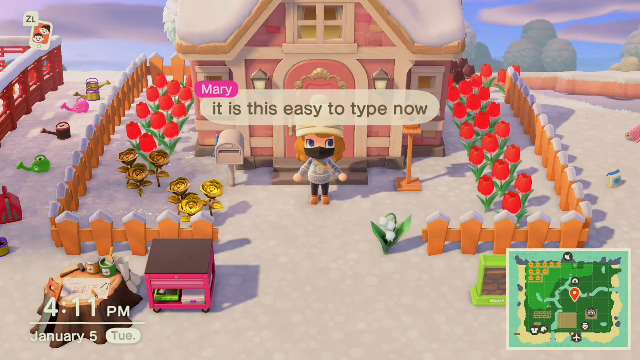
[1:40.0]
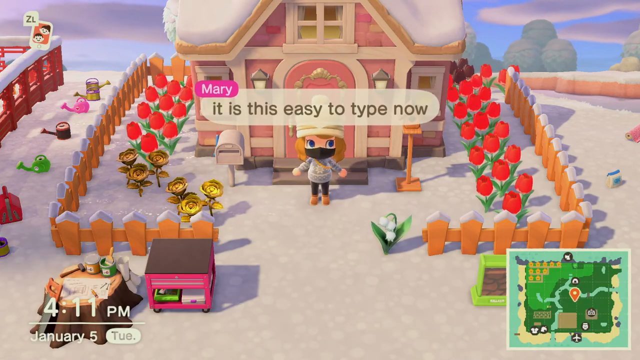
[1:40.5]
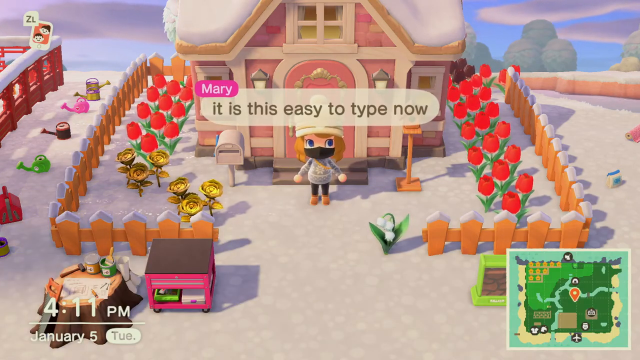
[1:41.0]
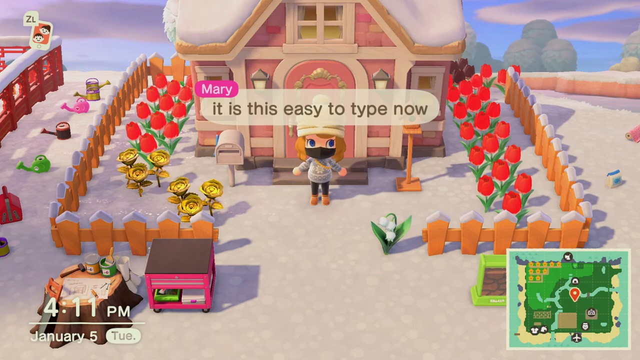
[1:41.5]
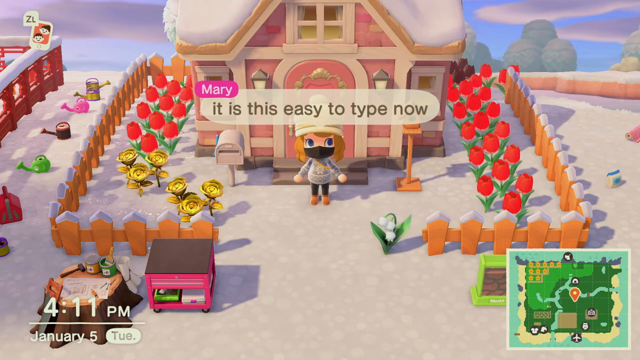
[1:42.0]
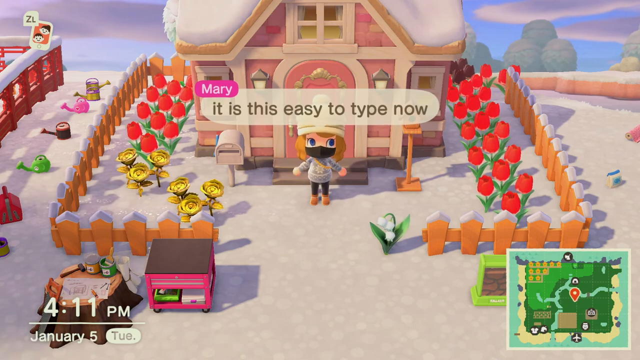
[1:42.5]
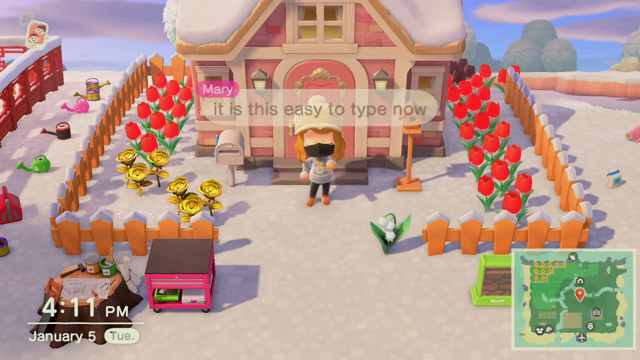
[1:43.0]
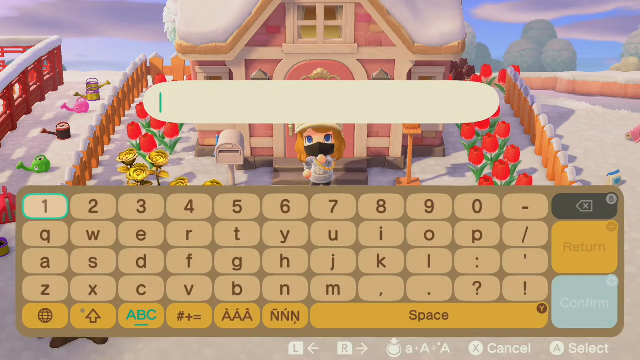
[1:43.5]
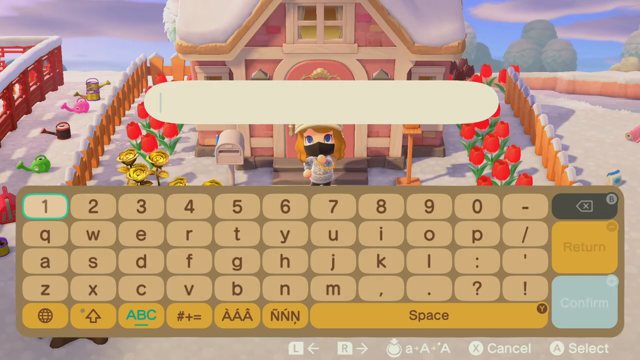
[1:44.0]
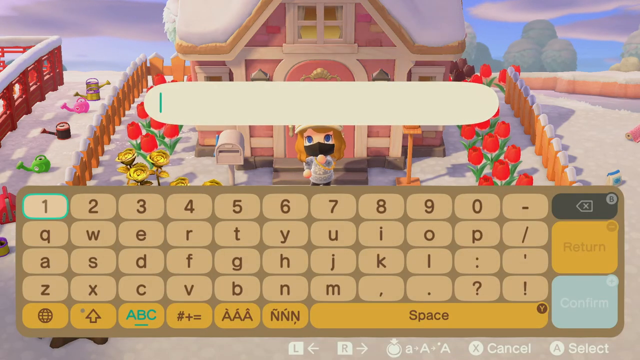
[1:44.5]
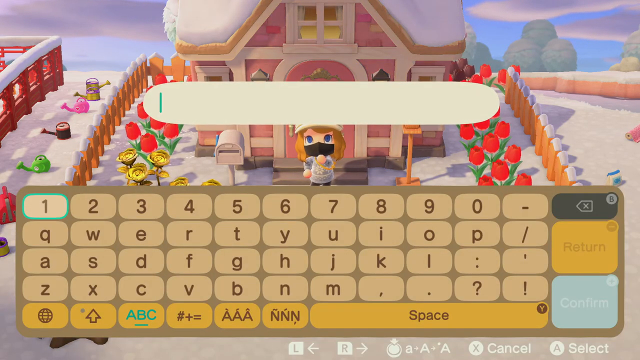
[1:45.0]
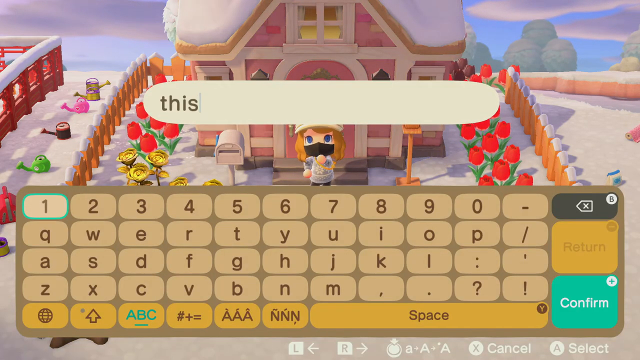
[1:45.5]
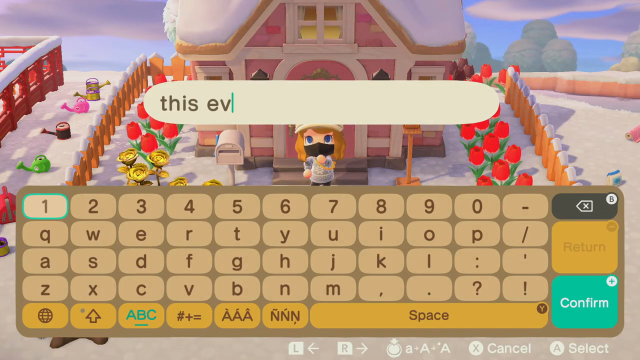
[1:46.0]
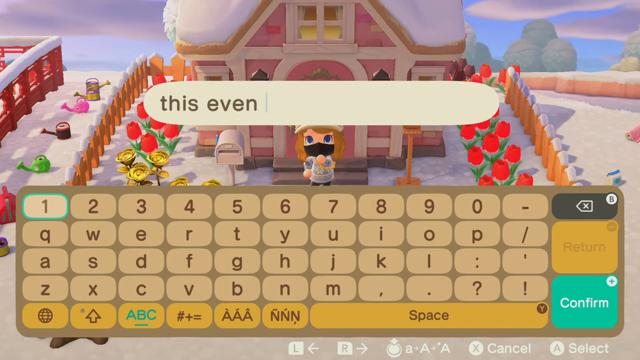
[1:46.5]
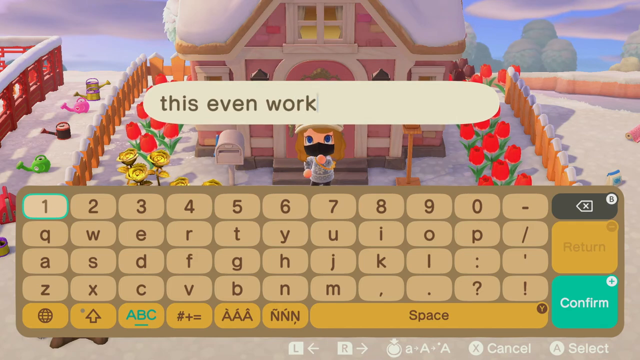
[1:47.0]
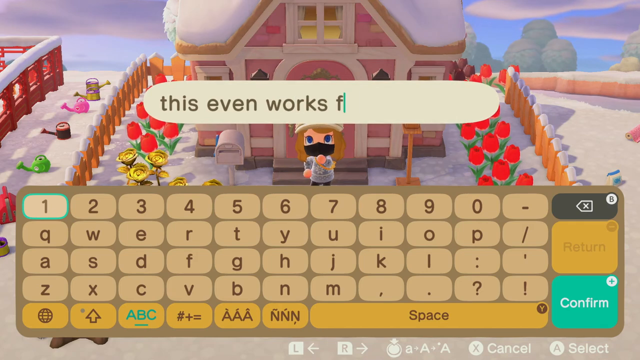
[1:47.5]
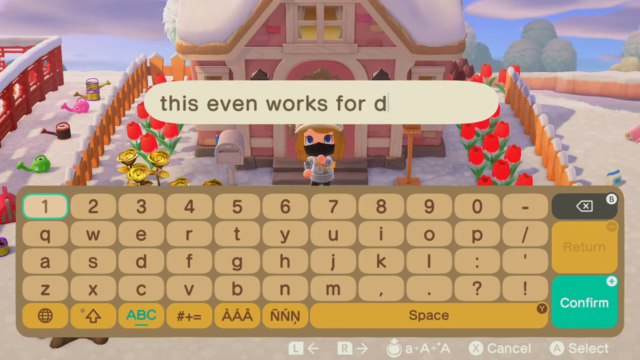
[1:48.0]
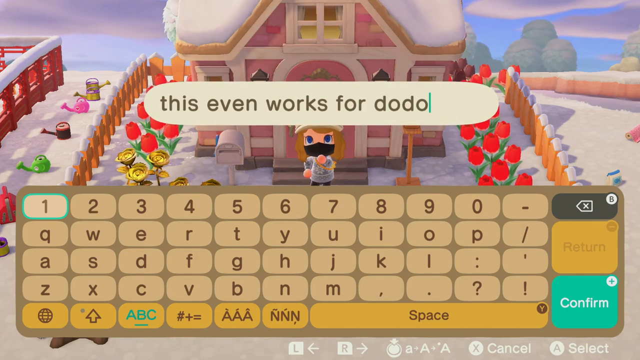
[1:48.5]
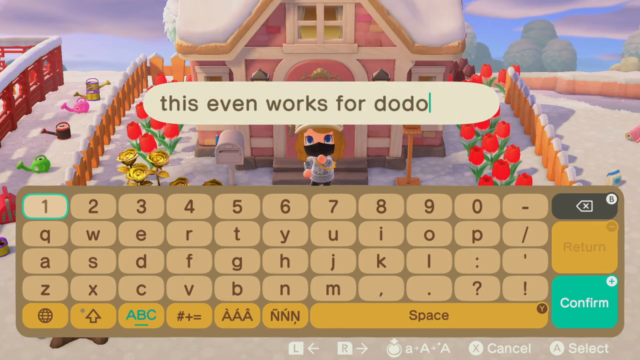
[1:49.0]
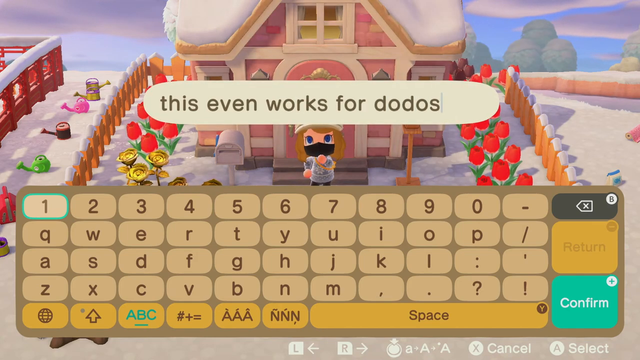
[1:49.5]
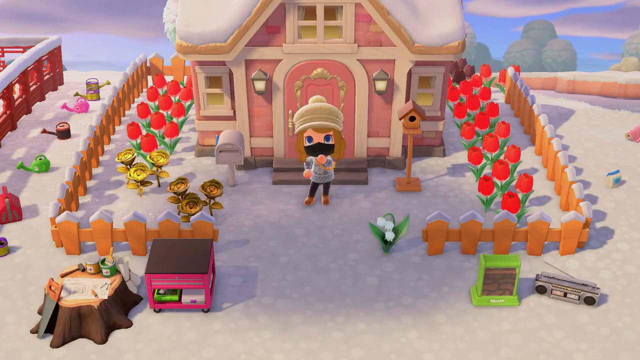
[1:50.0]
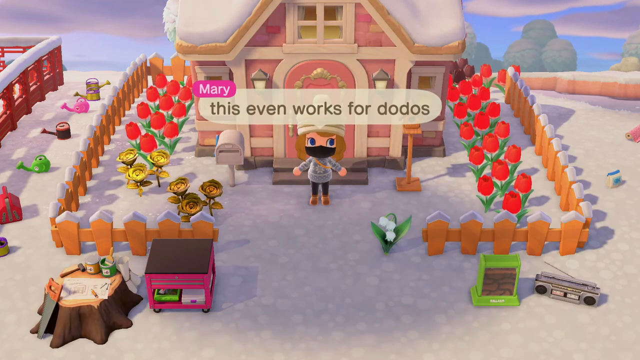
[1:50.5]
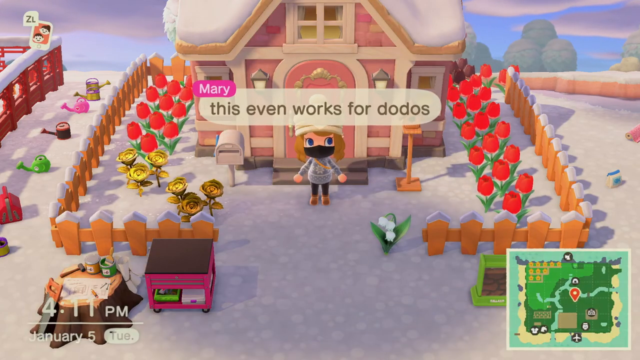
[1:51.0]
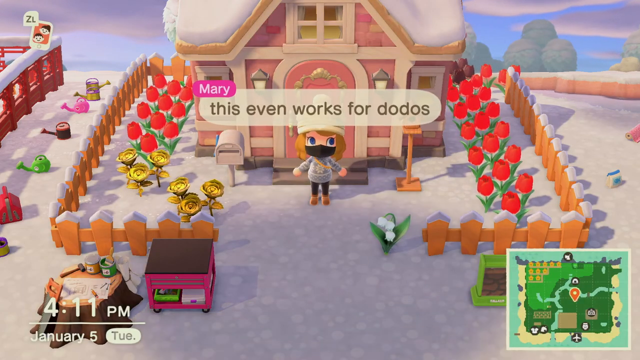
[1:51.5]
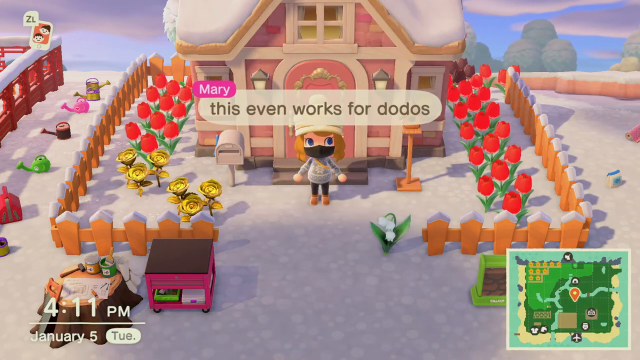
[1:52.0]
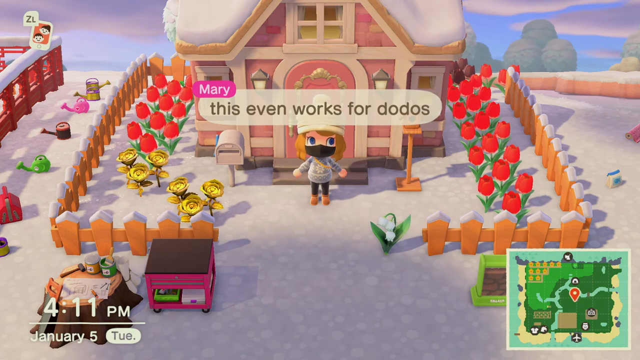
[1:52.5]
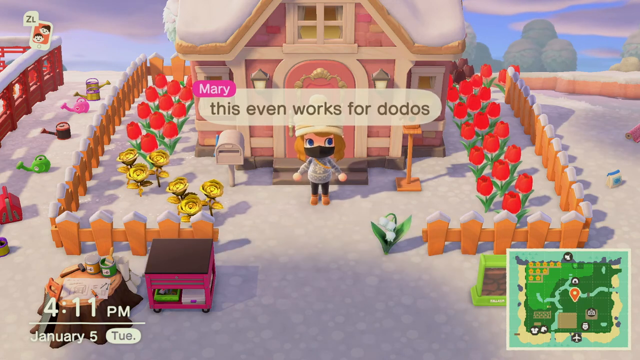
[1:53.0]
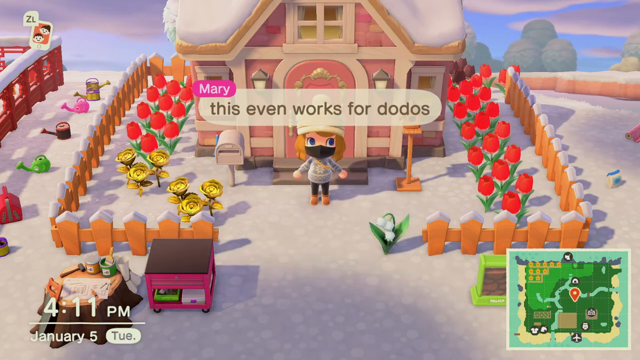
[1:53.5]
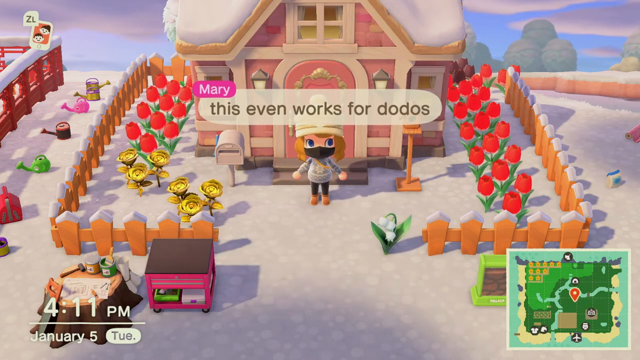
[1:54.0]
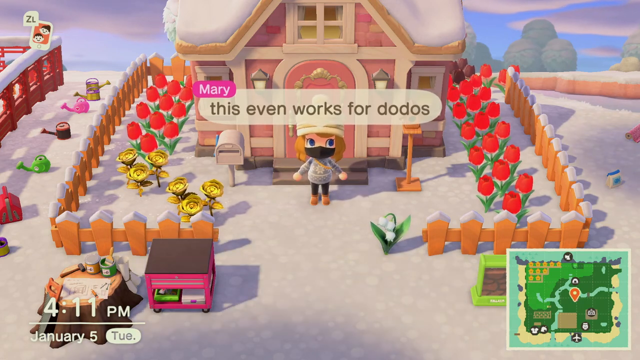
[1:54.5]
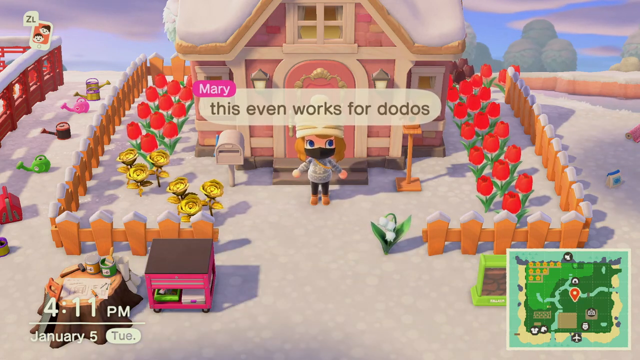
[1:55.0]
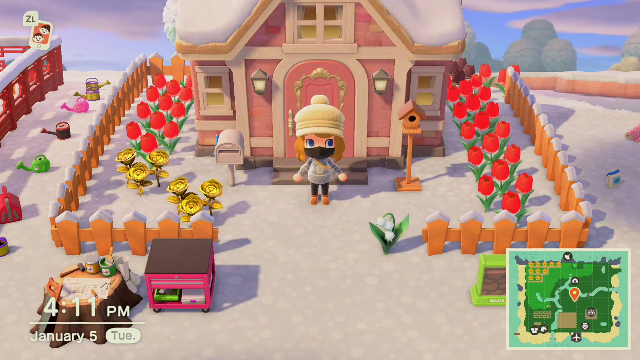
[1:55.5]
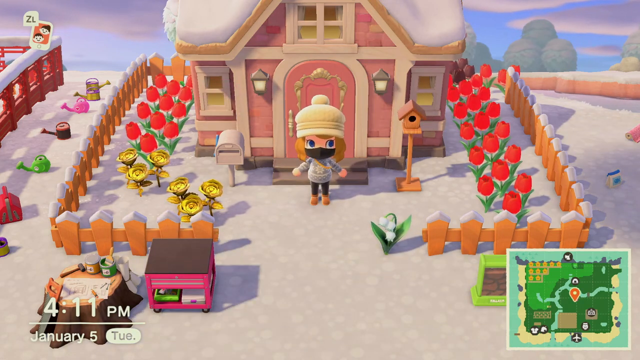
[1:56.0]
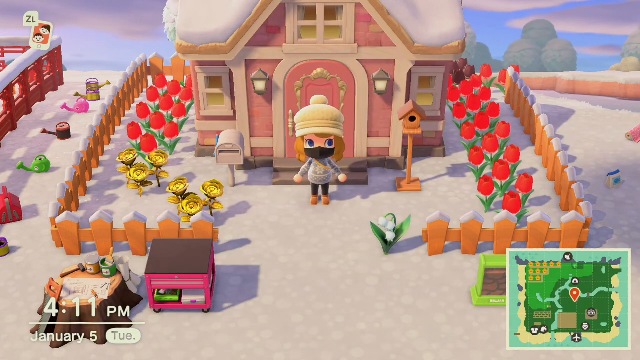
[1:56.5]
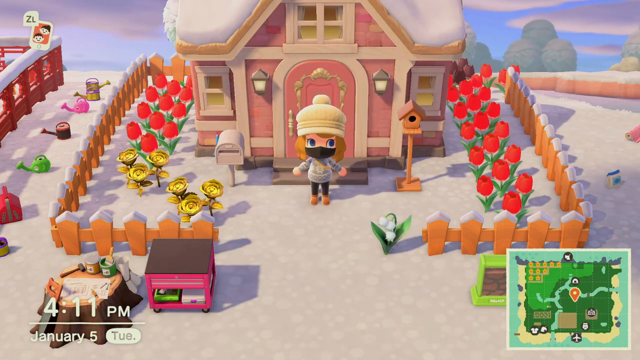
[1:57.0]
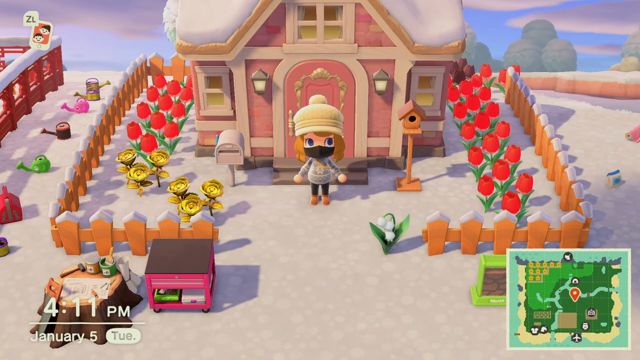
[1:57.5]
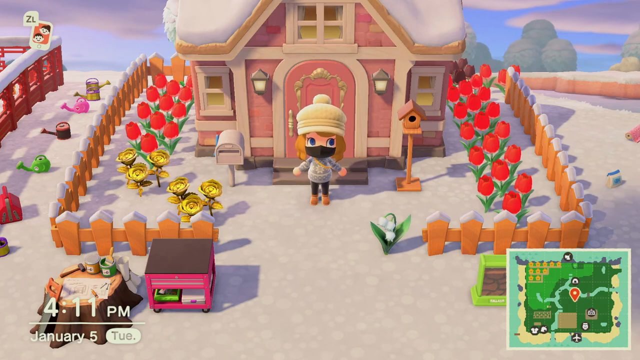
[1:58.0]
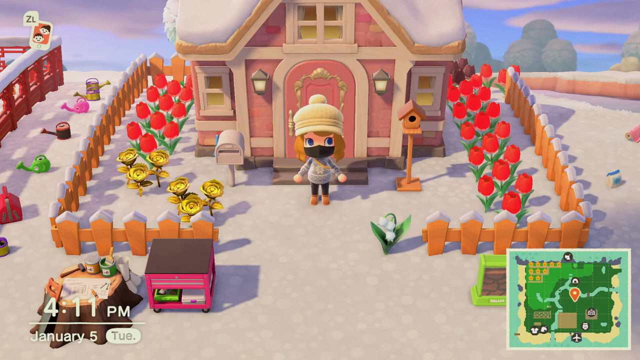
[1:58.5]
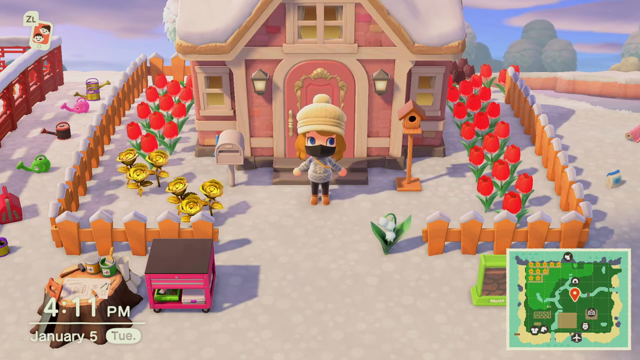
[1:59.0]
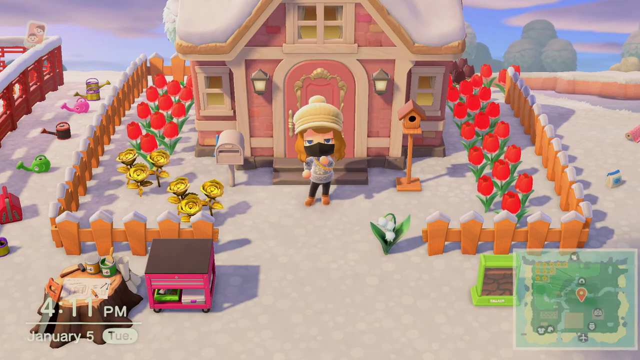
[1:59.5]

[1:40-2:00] In an Animal Crossing video game, a character comes out of a house. She types "this even works for Dodo's," and the character says "this even works for Dodo's." She is animated, moving her arms and blinking her eyes, and wears a hat and a black mask over her mouth. It looks like winter, with snow on the roof of the house and on the ground, yet red flowers are growing. What look like pails or watering cans are on one side of the house. The sky is blue and it looks like a sunny day. In the lower right-hand corner is what looks like a field. A pop-up with letters appears for typing a sentence that the character Mary will say. A wooden picket fence has snow on top of each section.